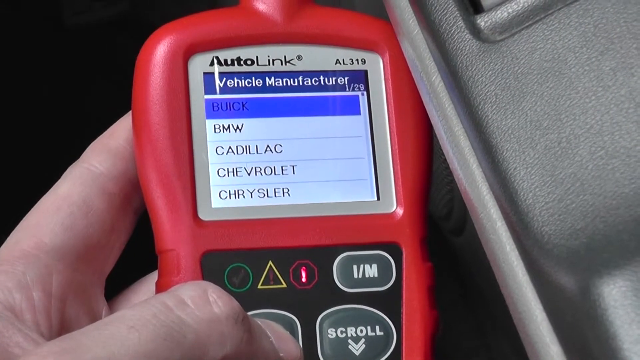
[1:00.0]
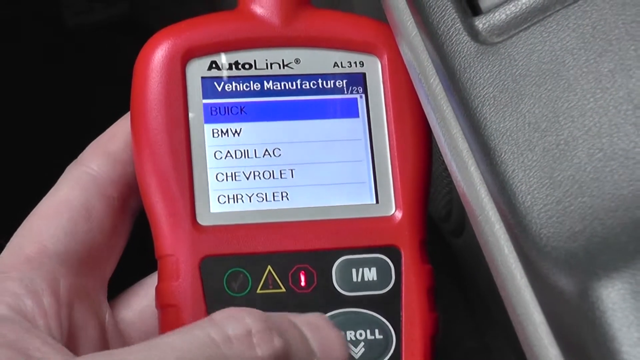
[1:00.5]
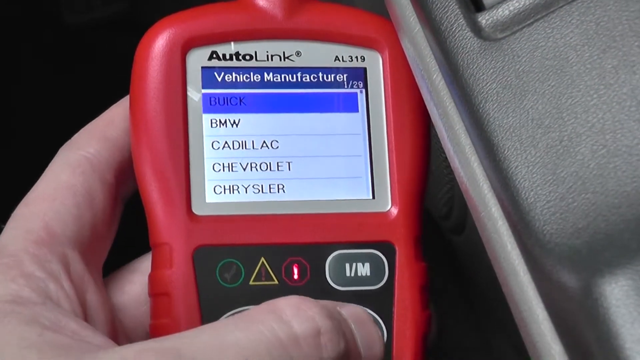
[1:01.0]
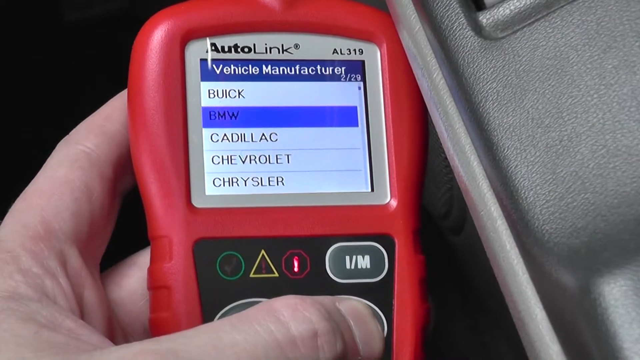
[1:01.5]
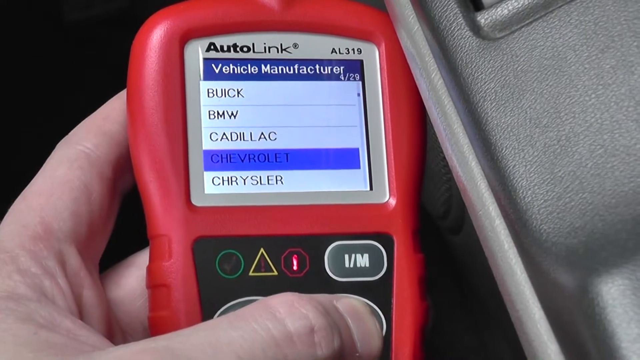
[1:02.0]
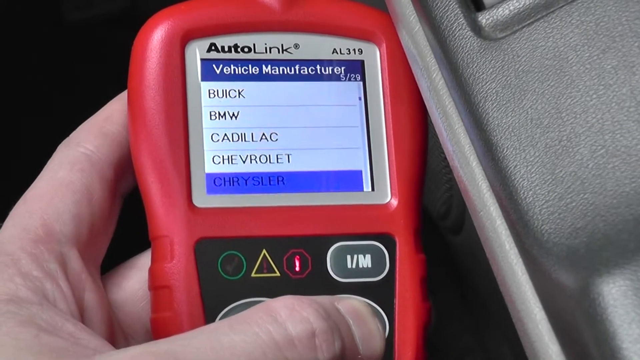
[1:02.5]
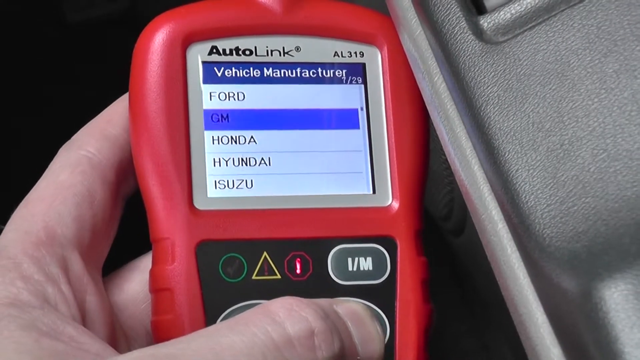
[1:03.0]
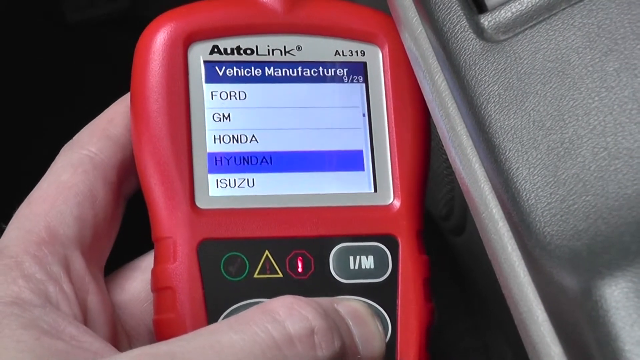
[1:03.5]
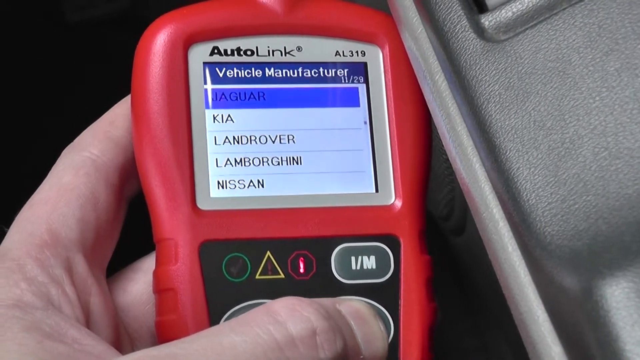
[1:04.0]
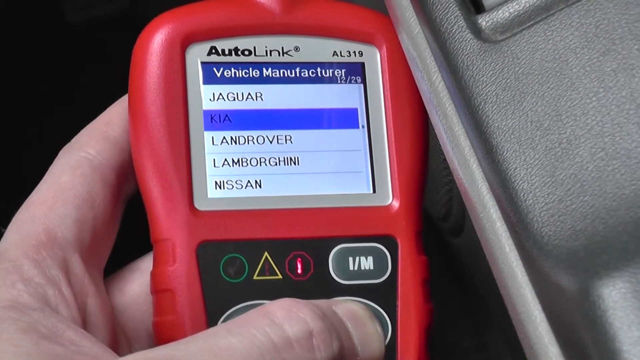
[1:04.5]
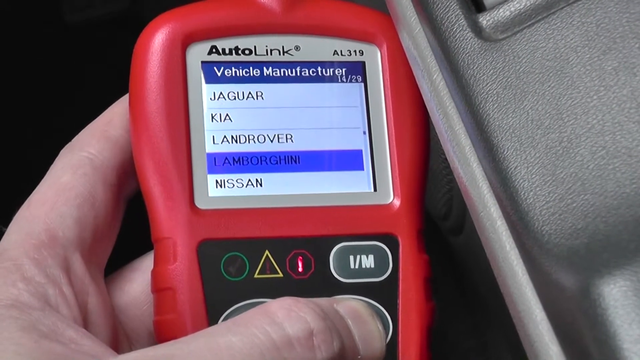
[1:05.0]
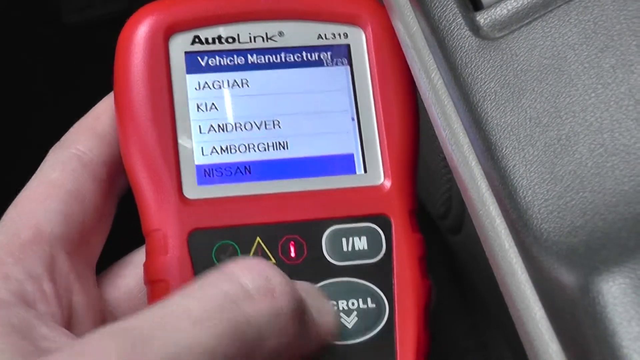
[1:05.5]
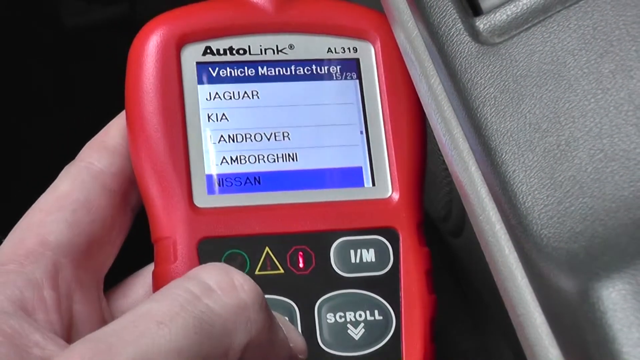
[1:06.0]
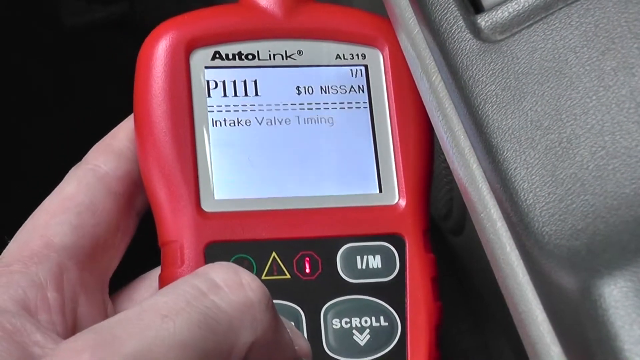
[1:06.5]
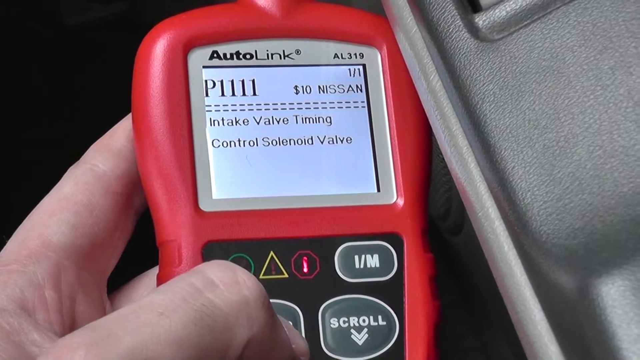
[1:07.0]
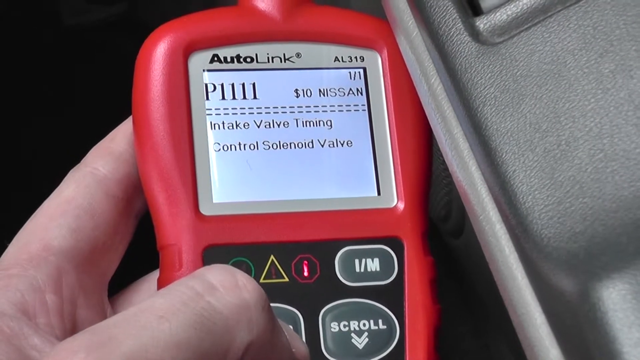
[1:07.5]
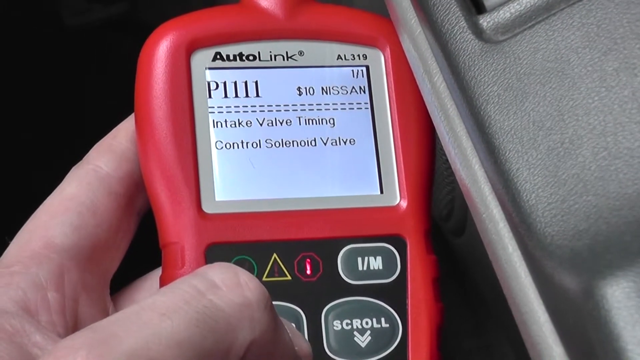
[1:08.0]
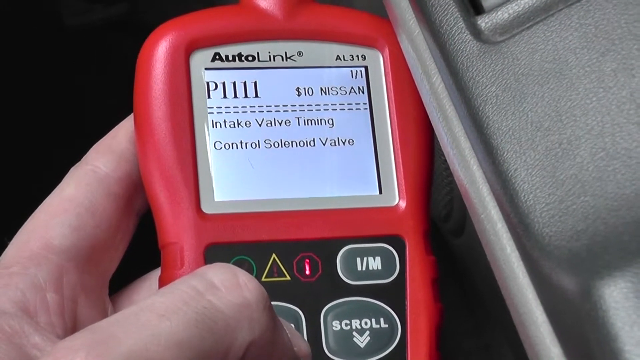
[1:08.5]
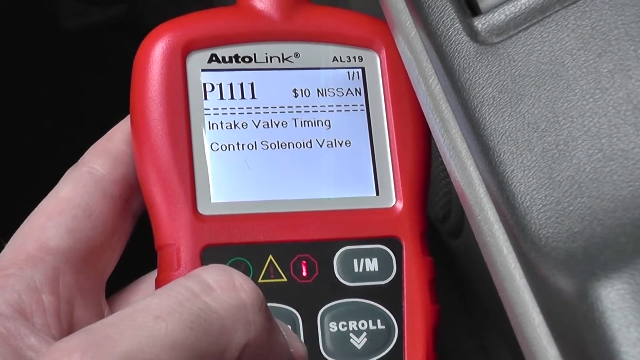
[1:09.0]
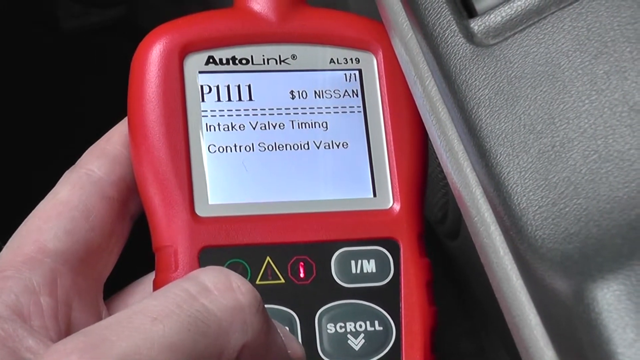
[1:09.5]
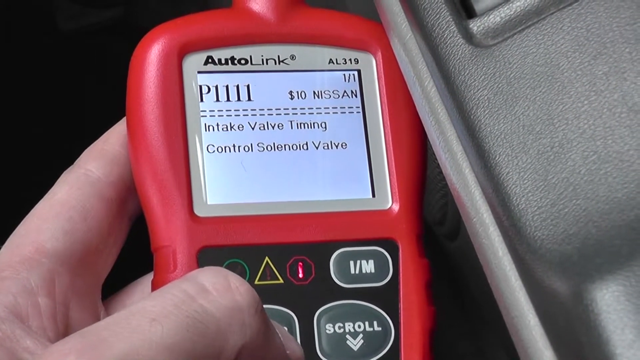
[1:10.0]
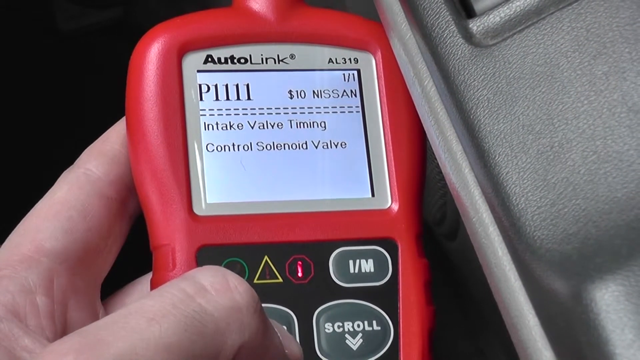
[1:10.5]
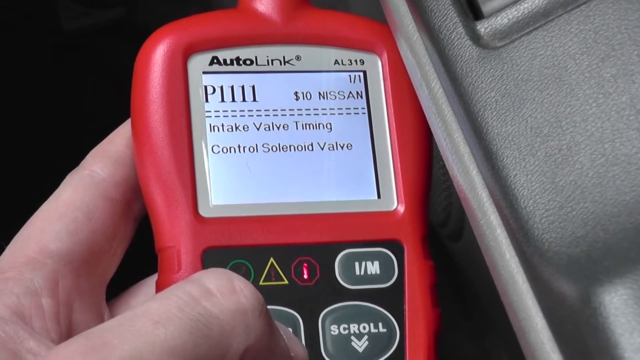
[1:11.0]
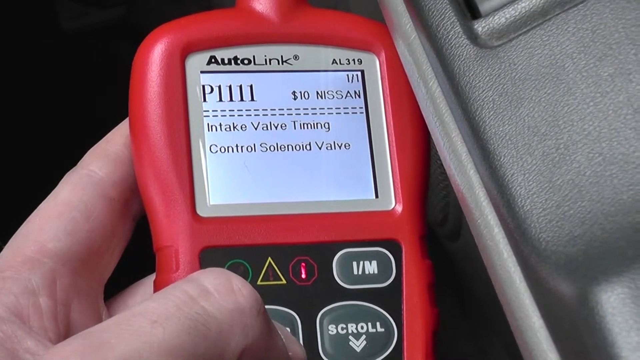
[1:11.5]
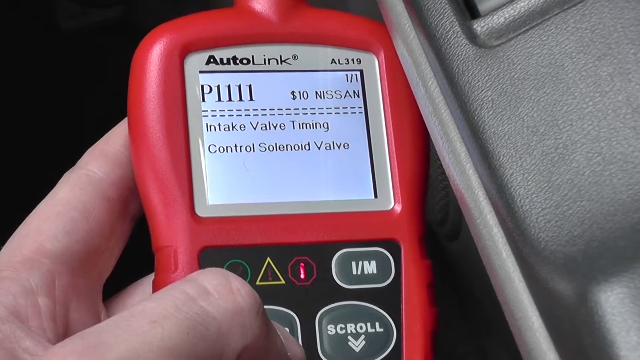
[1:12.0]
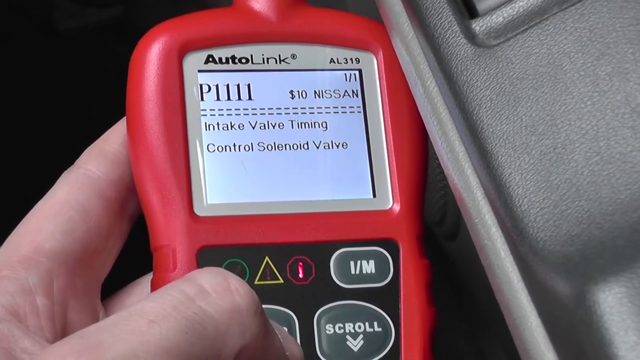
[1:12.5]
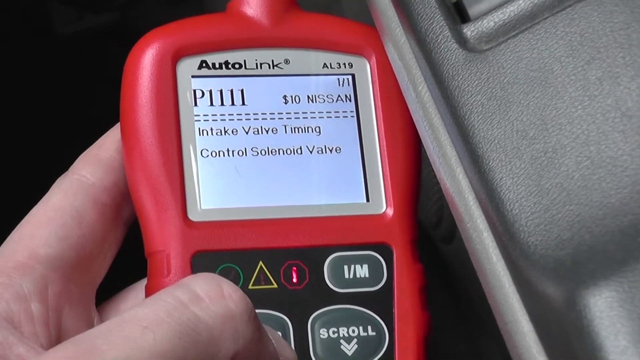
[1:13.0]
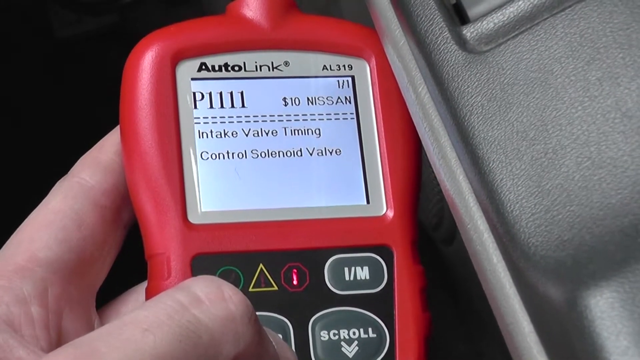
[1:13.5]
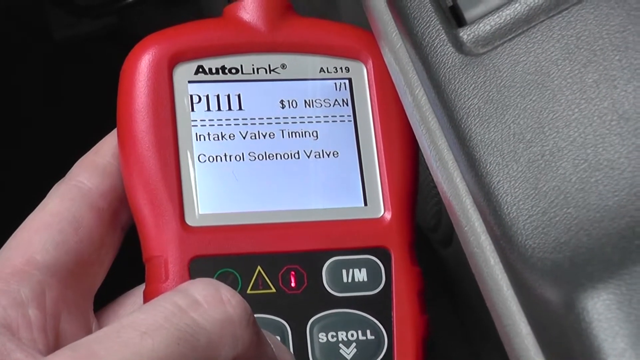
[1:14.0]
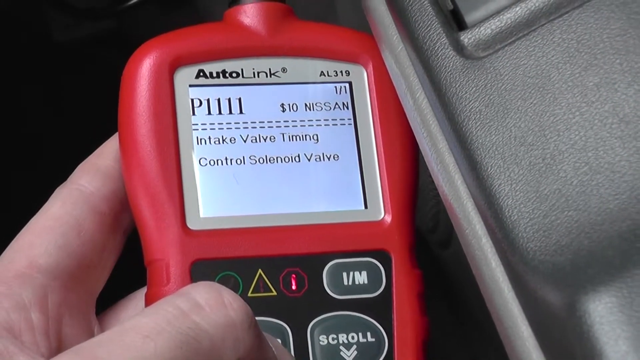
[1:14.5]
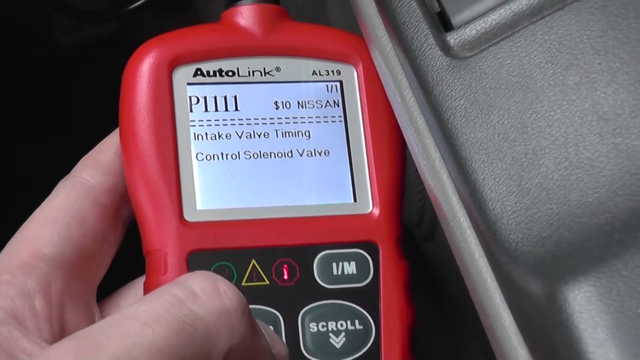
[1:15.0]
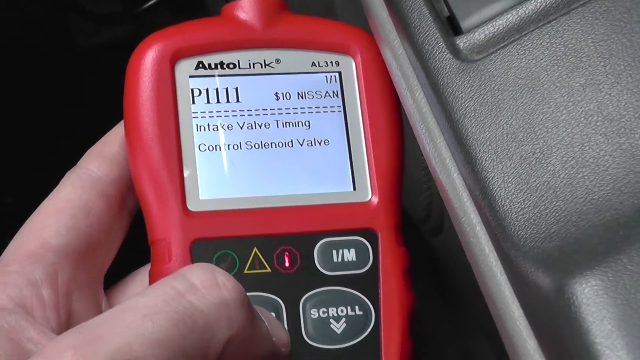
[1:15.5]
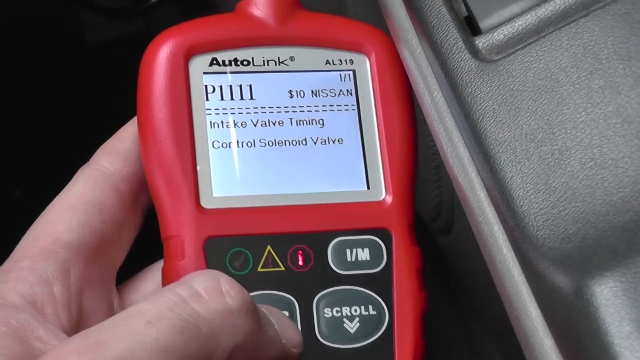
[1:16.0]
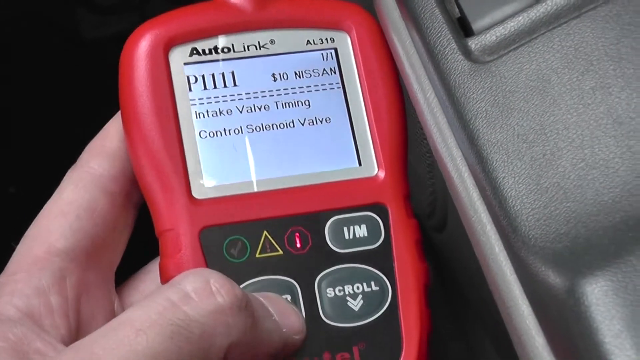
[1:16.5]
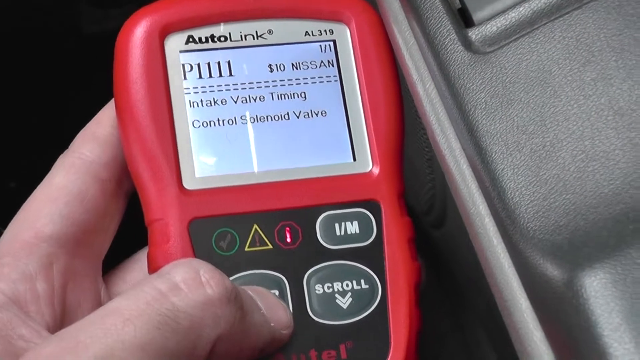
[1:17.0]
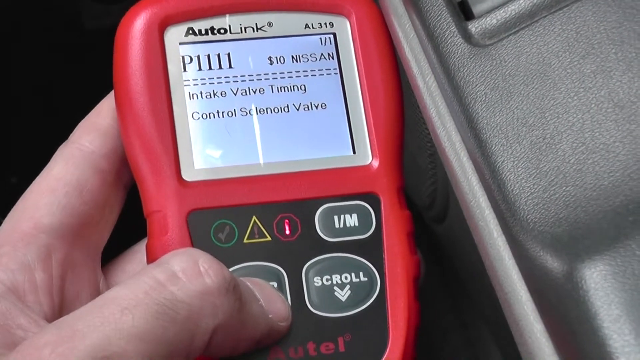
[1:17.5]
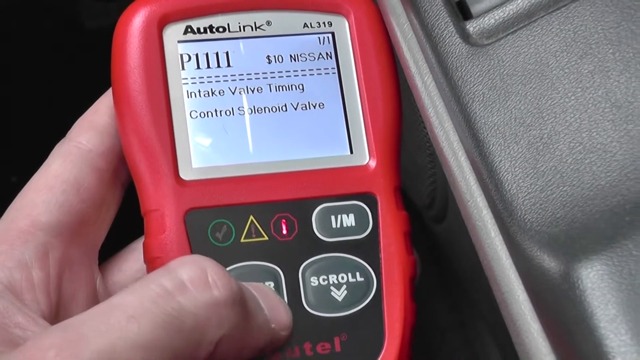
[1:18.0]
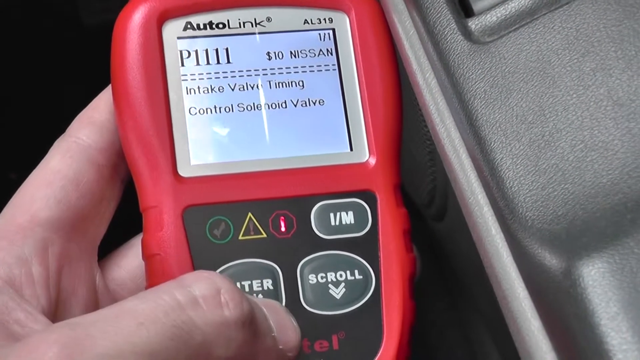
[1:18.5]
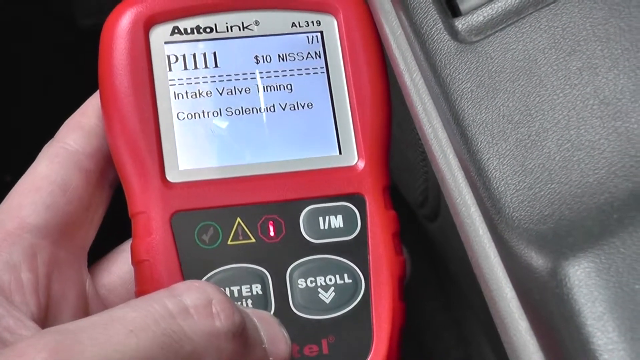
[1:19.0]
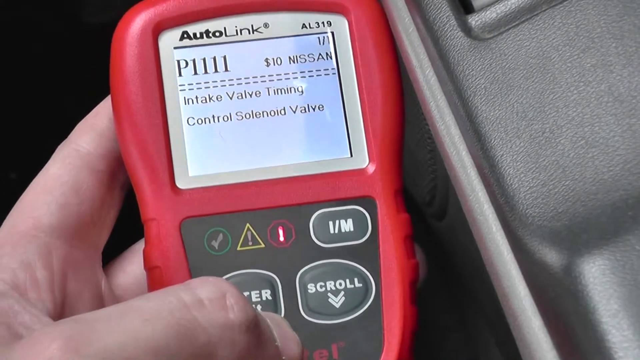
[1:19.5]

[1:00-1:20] The mechanic holds the diagnostic tool in his left hand, its screen listing vehicle manufacturers under "vehicle manufacturer" at the top. Buick, BMW, Cadillac, Chevrolet, and Chrysler are listed in a column, with Buick highlighted in purple. His left thumb rests on the enter button, then moves to the scroll button on the right side of the device, which he clicks repeatedly, scrolling the screen down until he reaches Nissan. He clicks the scroll button one more time, moves over to enter, and presses it to pull up the code information for the Nissan vehicle he is working on.